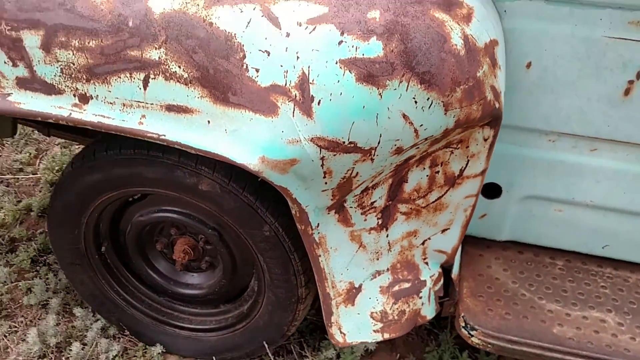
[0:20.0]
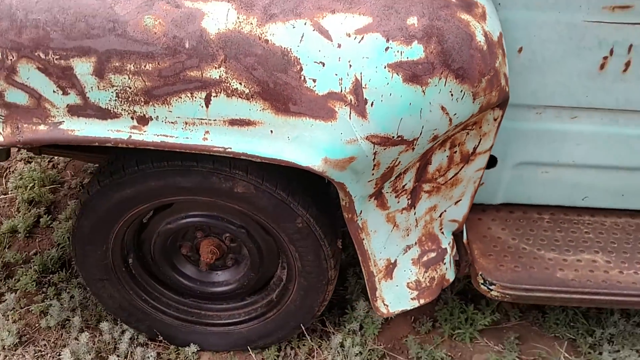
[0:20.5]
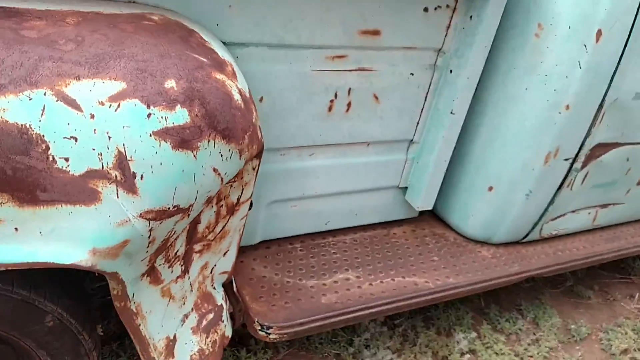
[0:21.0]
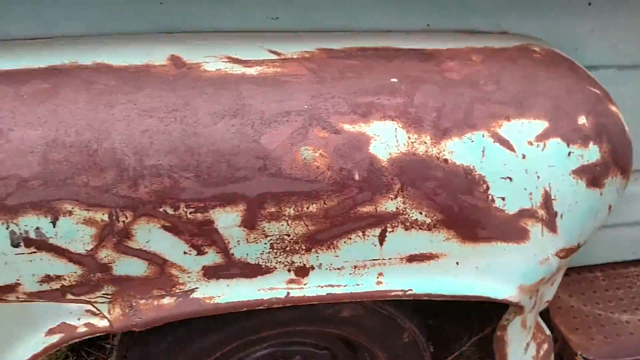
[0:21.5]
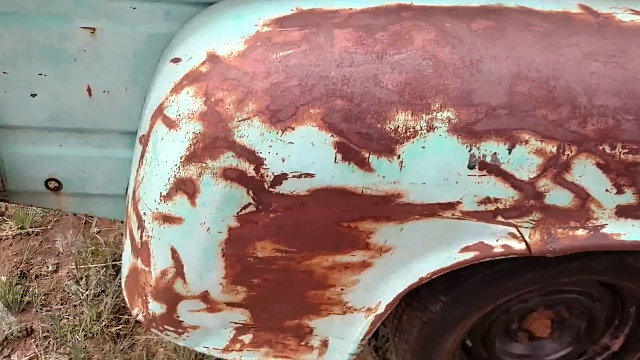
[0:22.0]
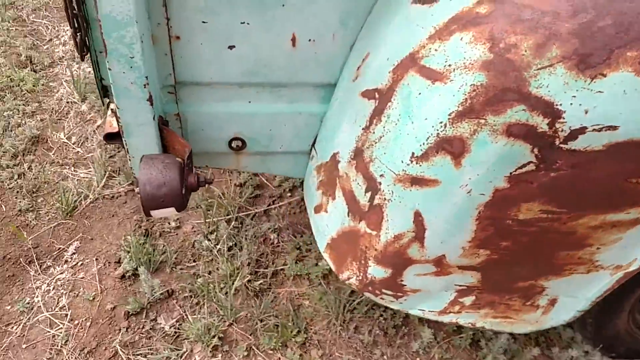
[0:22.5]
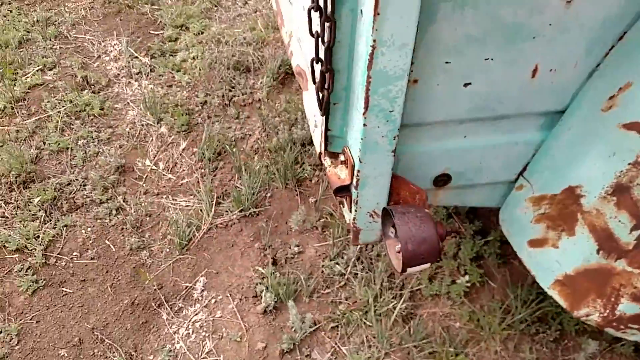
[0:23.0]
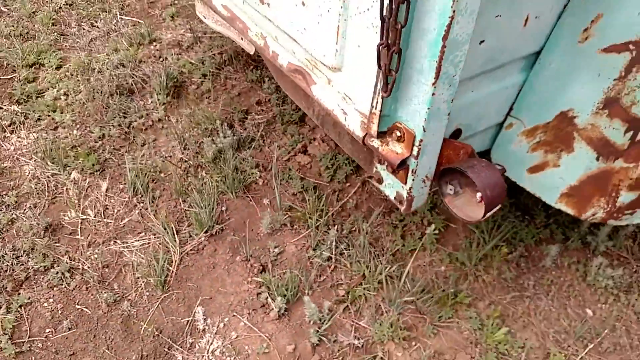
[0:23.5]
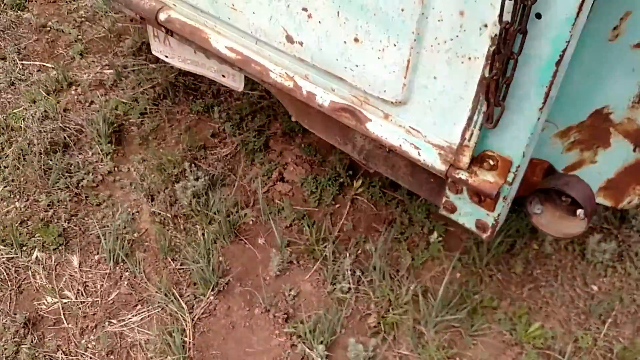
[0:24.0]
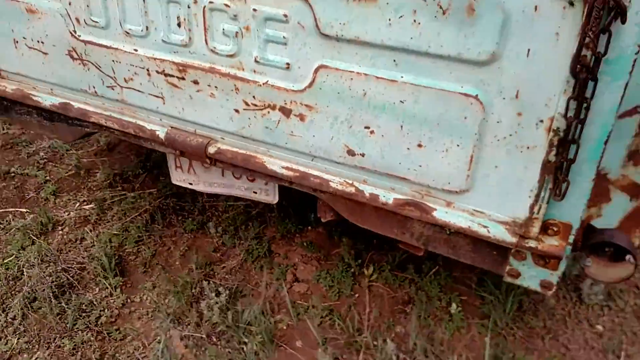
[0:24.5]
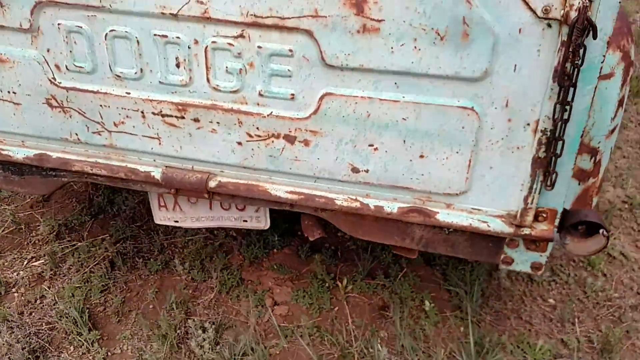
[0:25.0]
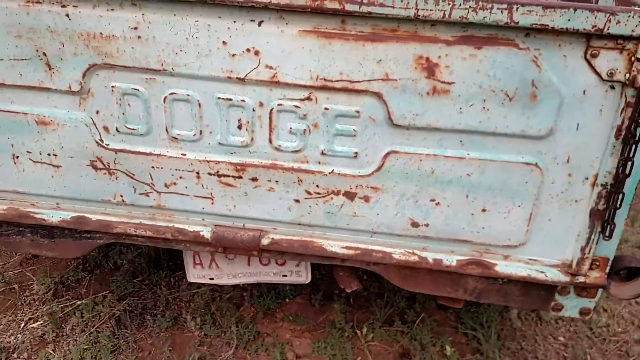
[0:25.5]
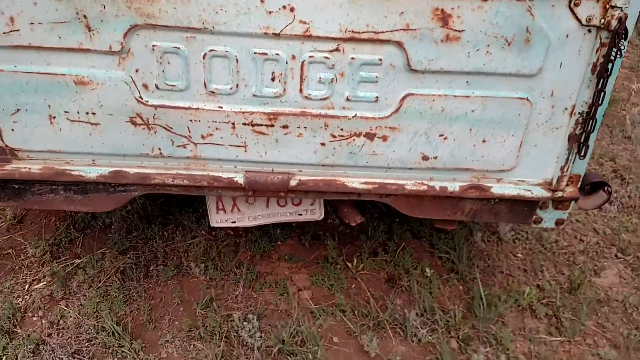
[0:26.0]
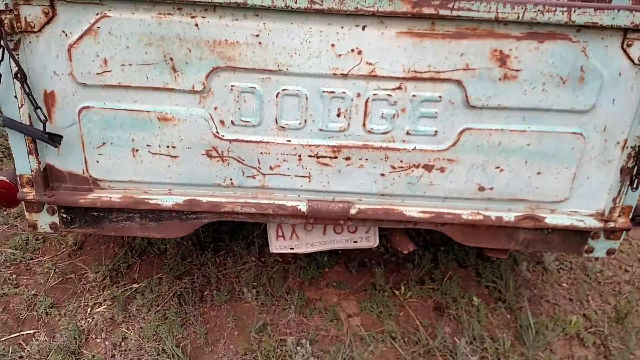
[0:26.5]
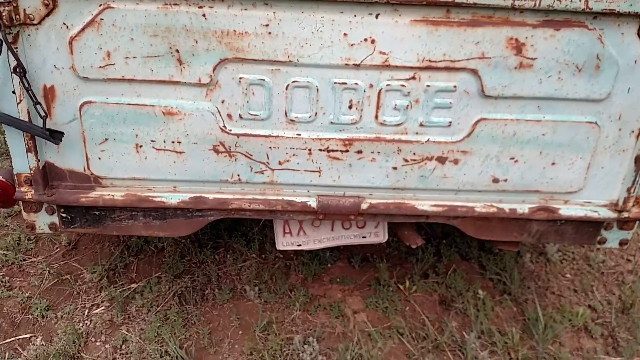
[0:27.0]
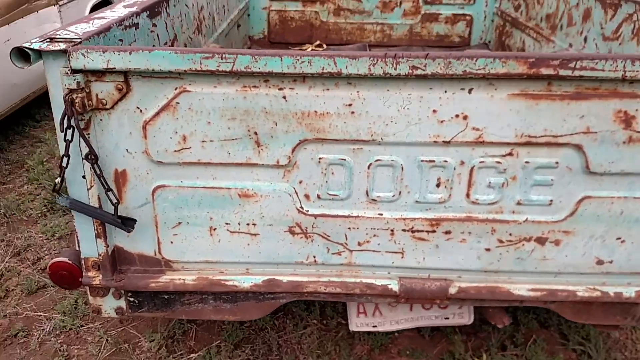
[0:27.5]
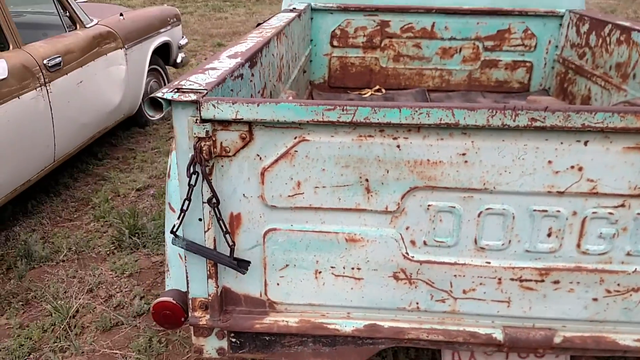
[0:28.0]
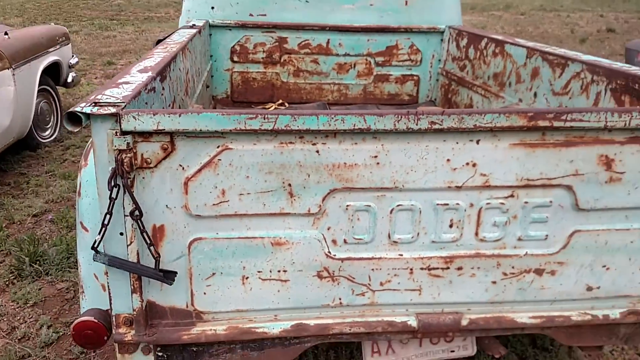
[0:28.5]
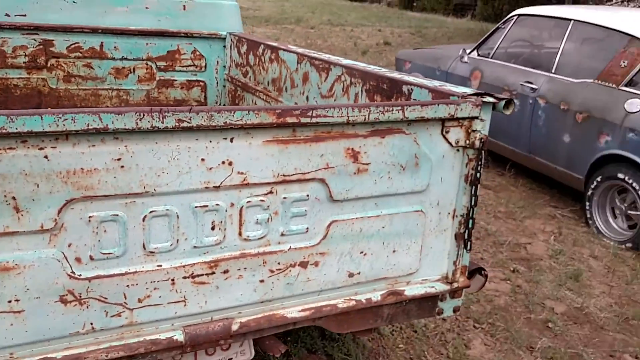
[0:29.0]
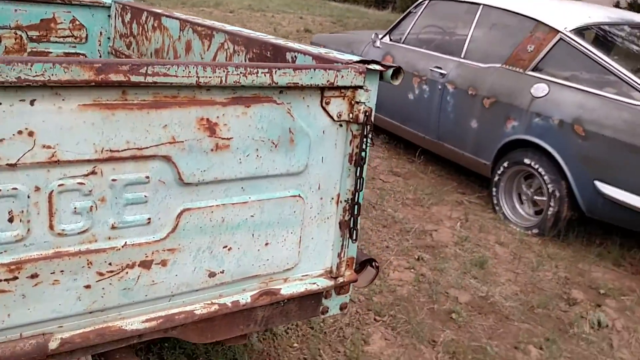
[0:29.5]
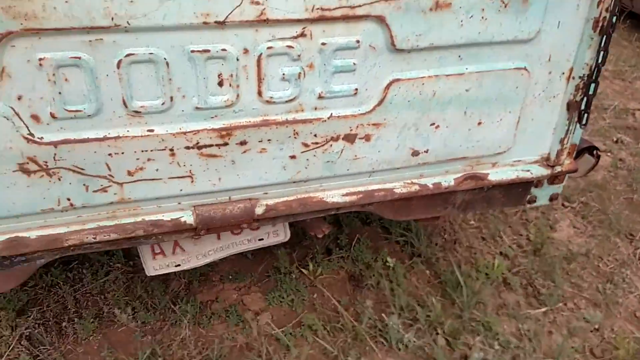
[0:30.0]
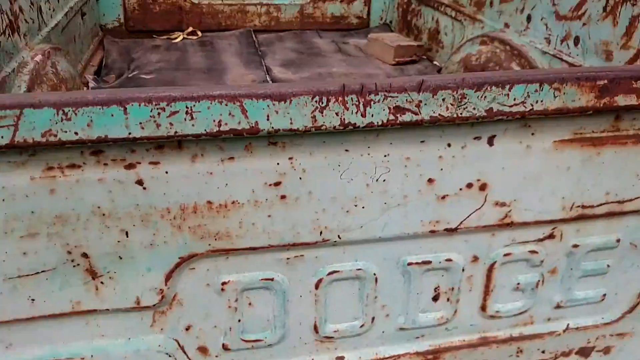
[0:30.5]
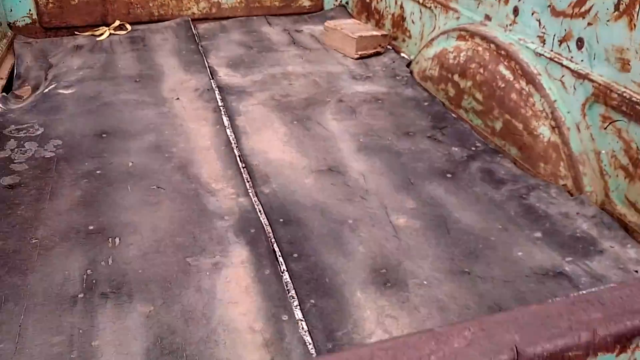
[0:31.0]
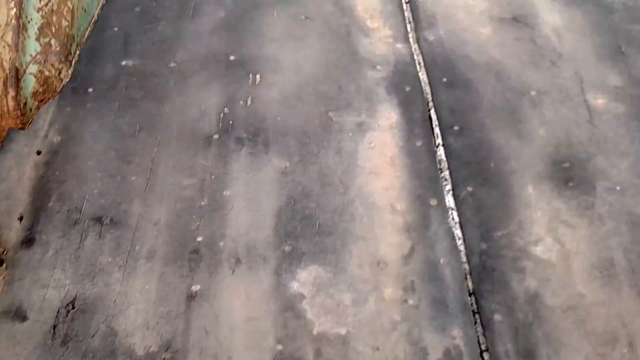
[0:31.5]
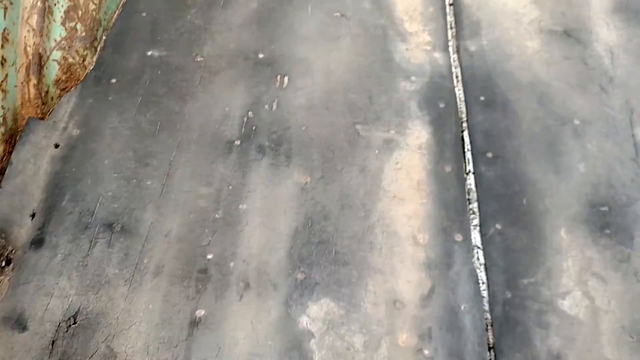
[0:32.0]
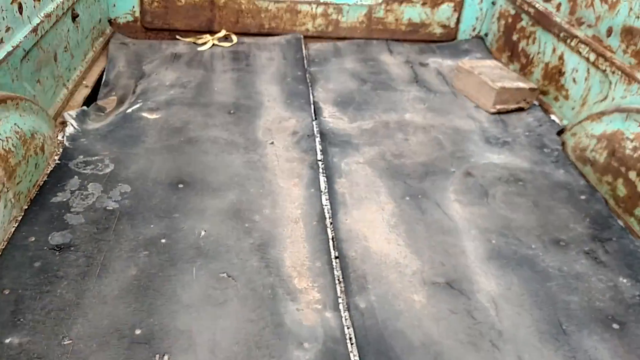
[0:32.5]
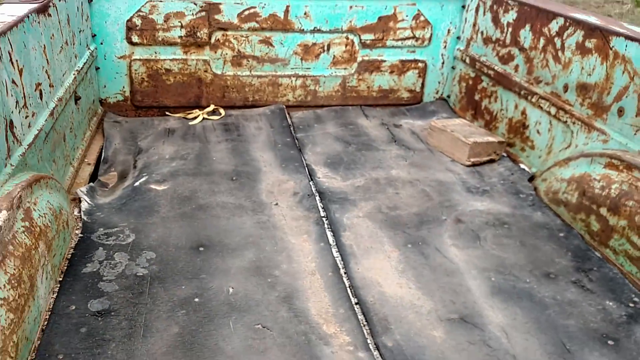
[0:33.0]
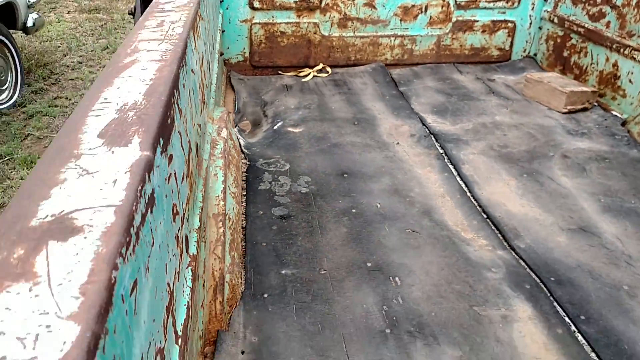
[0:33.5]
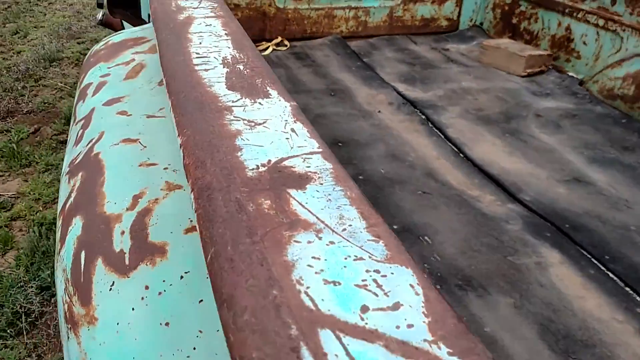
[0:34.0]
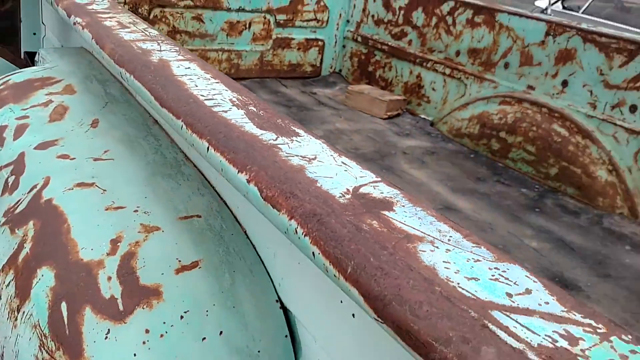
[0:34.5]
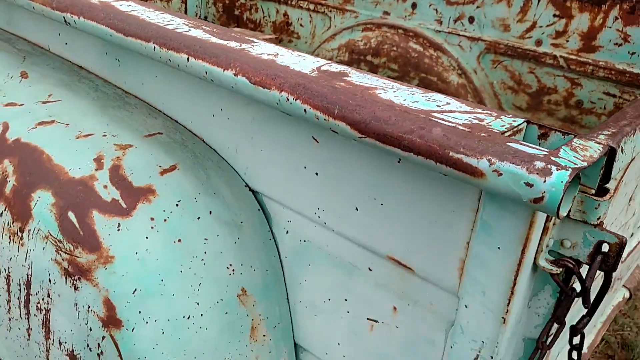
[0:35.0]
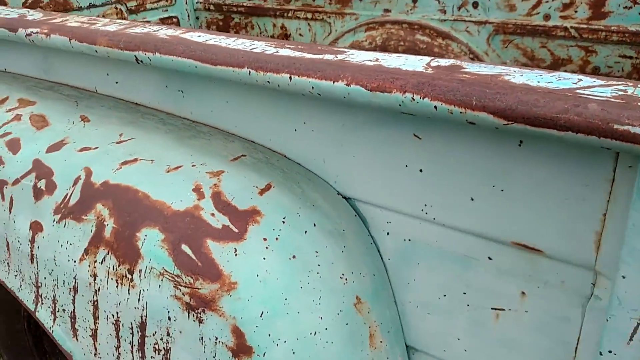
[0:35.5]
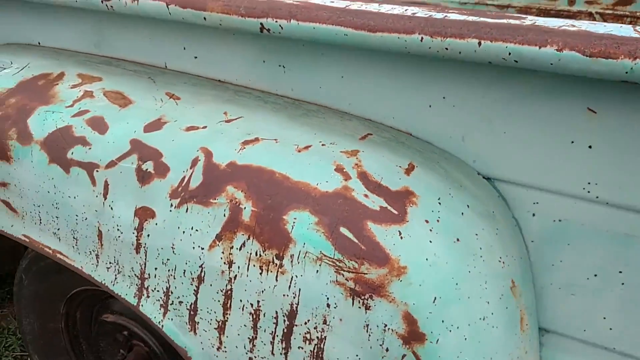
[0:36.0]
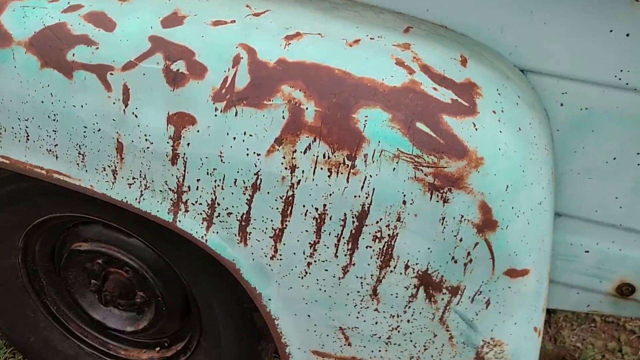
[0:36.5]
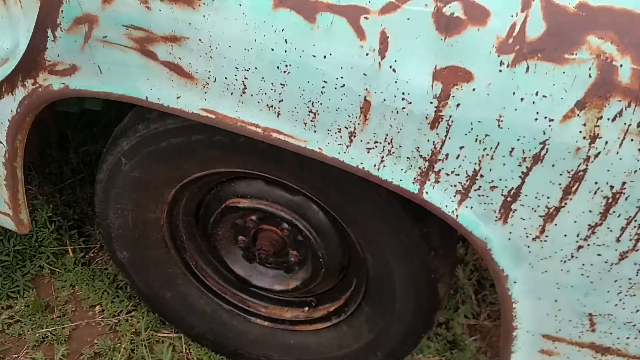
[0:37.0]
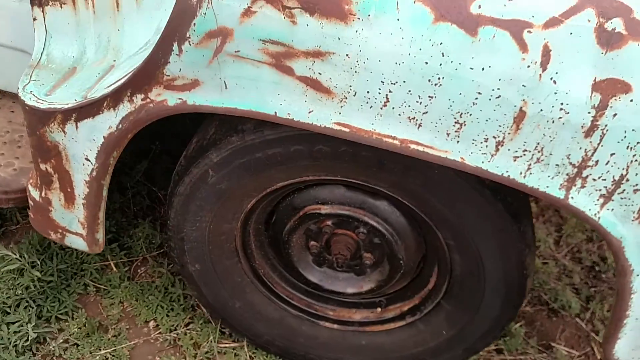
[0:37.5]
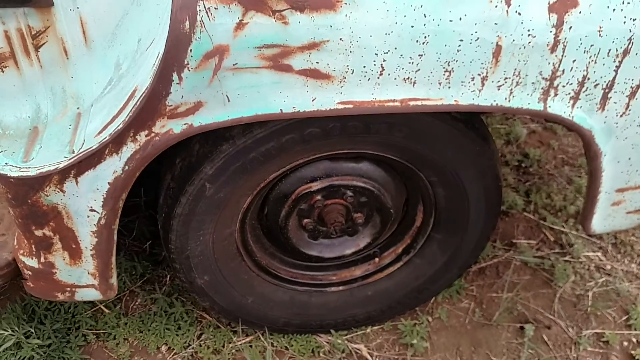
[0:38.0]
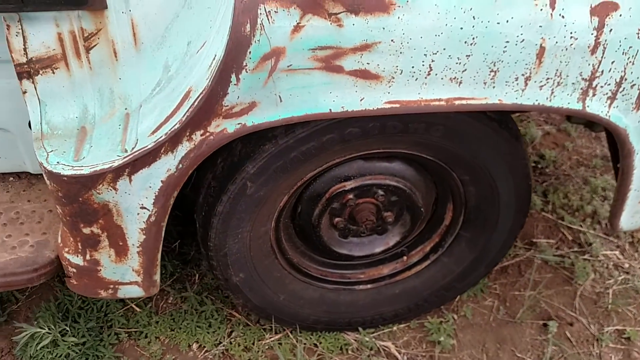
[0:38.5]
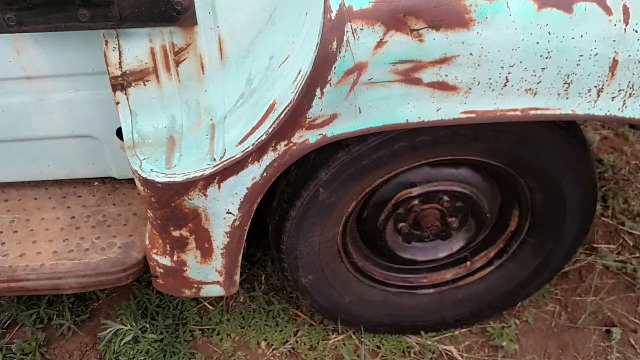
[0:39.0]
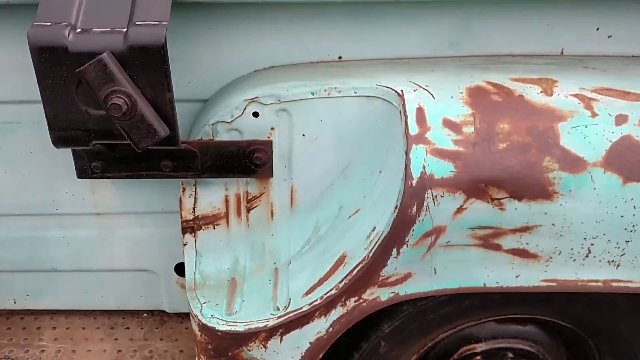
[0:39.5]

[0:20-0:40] The camera focuses on the fender at the back of a Dodge pickup truck. The fender is dented, the paint is very chipped, and the metal of the body is rusted; it looks very old and damaged. The tire looks like a spare tire. The camera zooms back a little and moves to the back of the truck, which is just as damaged. The word "DODGE" is carved into the frame on the back, and there is a license plate at the bottom. The camera pans up to show that the bed of the pickup is fairly empty but also really damaged. It looks to the right a little, revealing a car to the right of the truck. The camera goes inside the bed of the truck and comes back out, showing that the inside is really damaged too. It then looks at the tires and comes back around to the other side of the truck, continuing a full 360 overview of the truck's body.